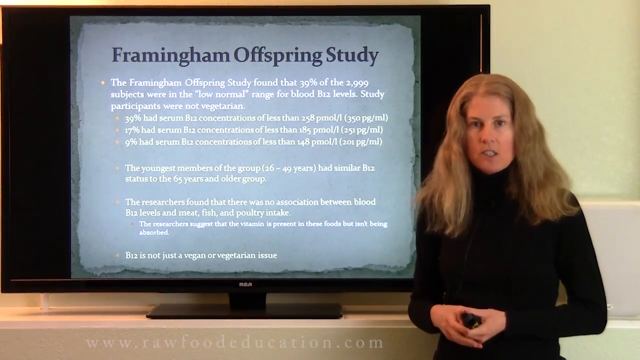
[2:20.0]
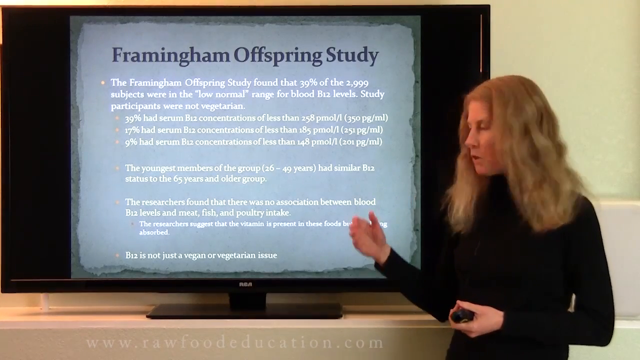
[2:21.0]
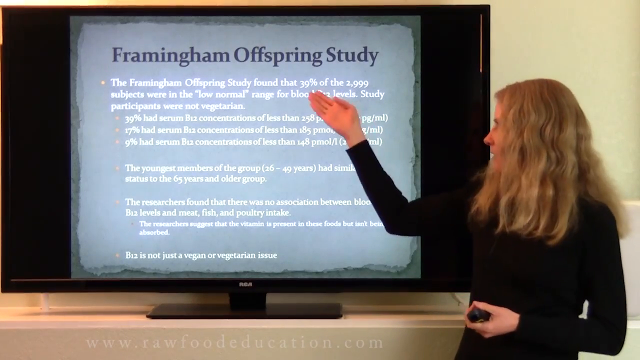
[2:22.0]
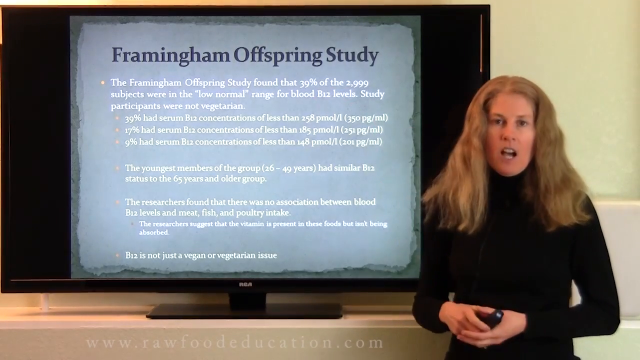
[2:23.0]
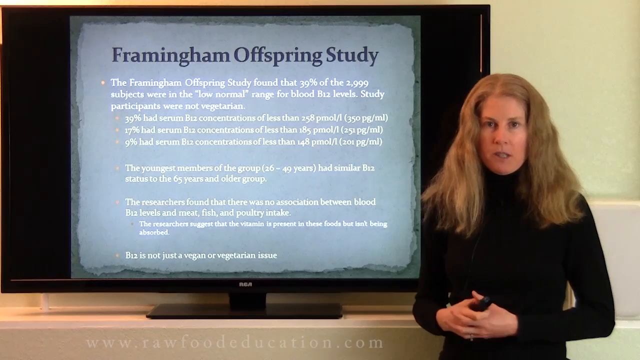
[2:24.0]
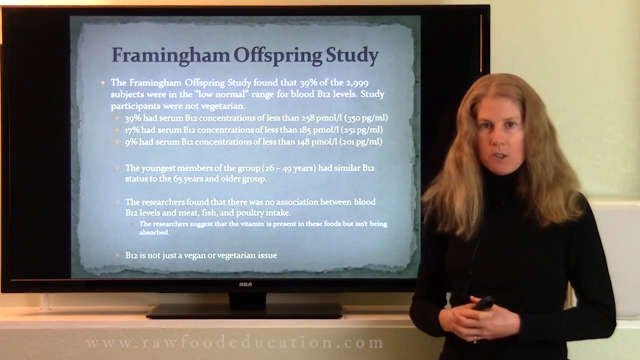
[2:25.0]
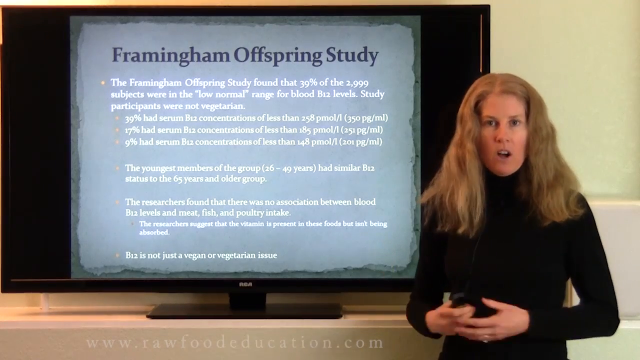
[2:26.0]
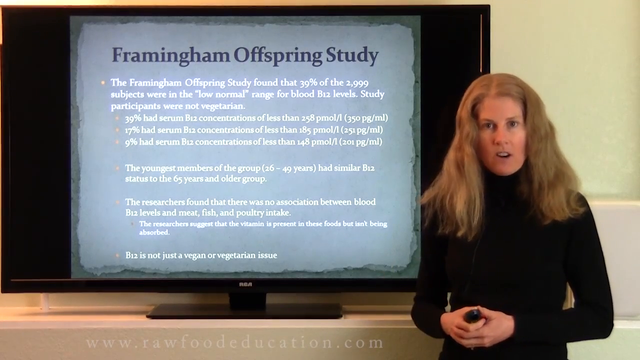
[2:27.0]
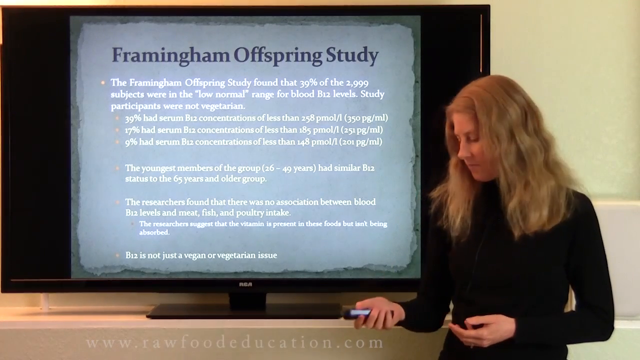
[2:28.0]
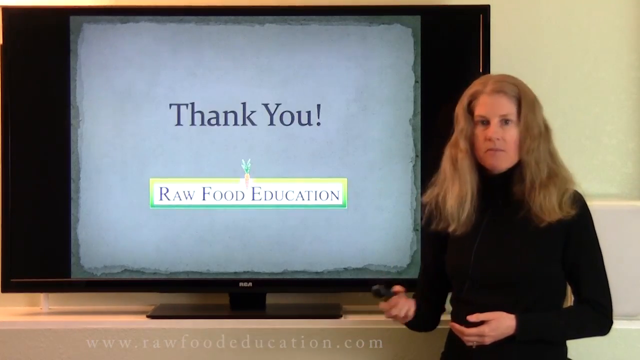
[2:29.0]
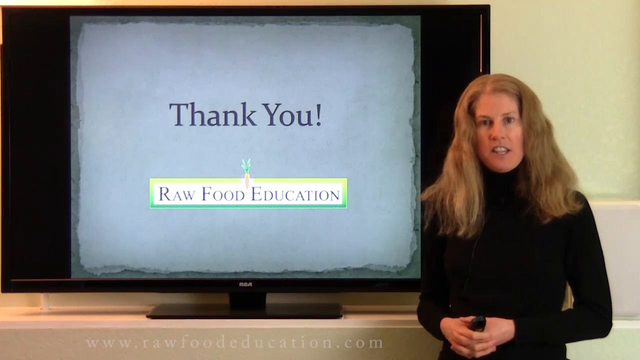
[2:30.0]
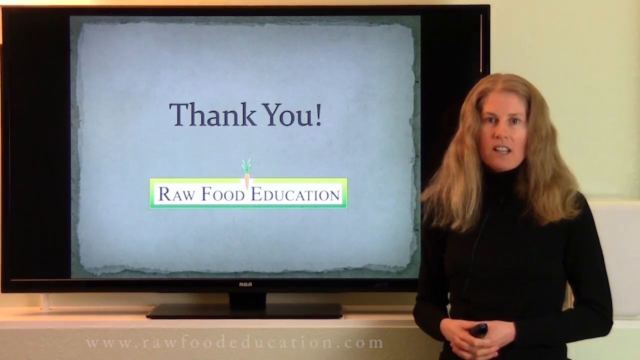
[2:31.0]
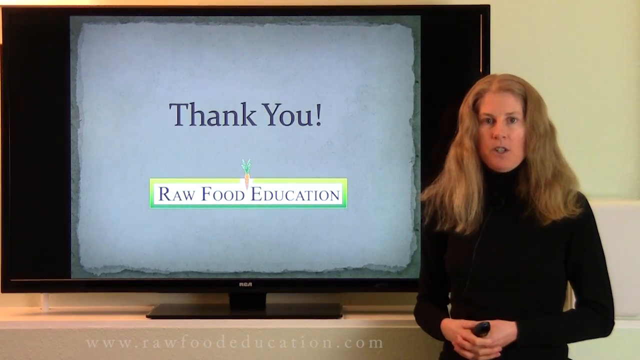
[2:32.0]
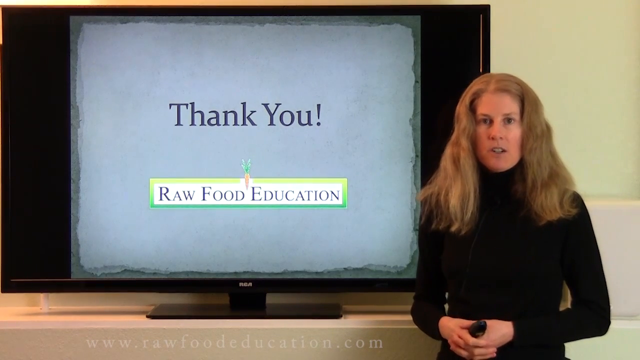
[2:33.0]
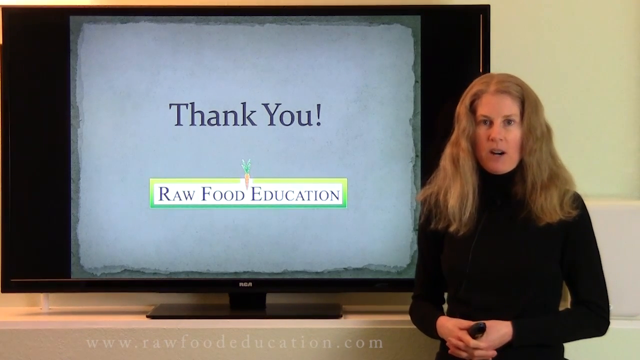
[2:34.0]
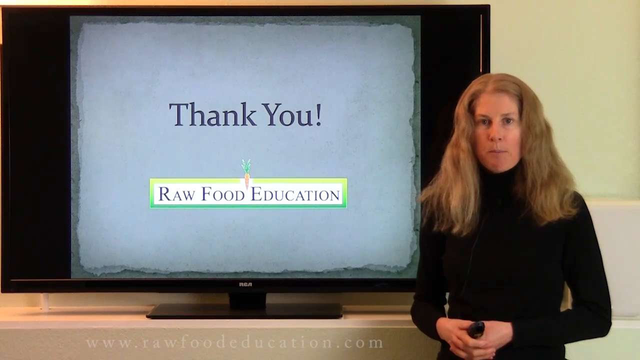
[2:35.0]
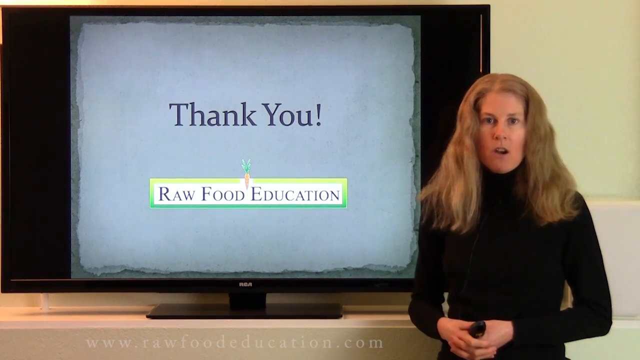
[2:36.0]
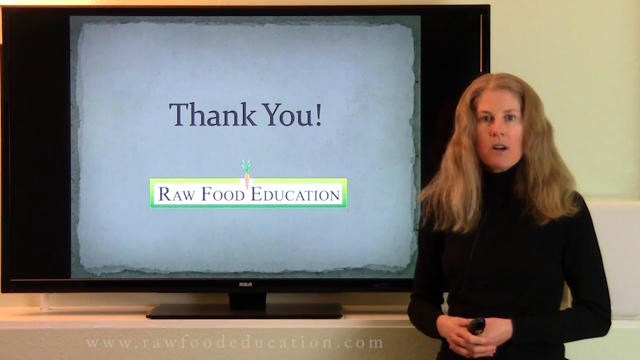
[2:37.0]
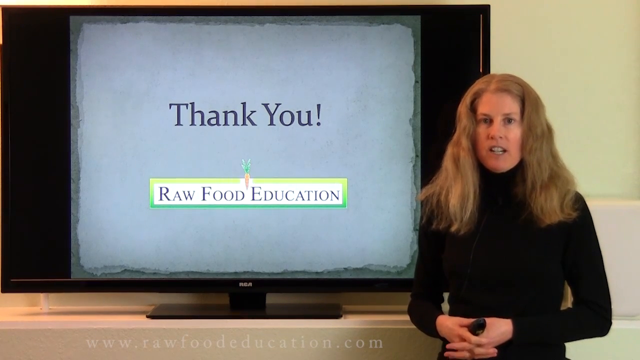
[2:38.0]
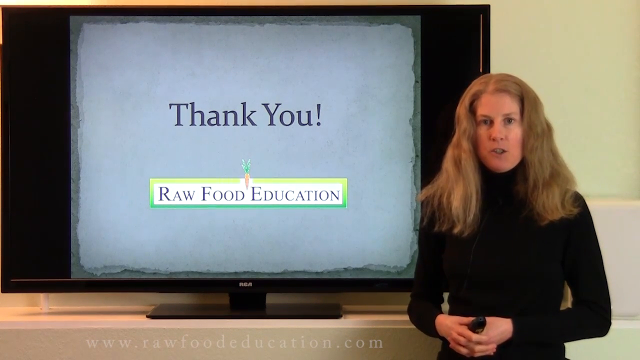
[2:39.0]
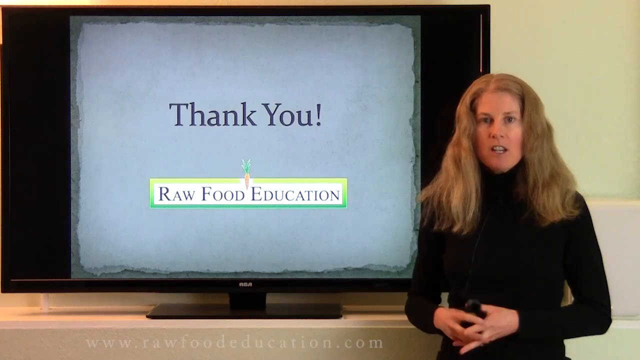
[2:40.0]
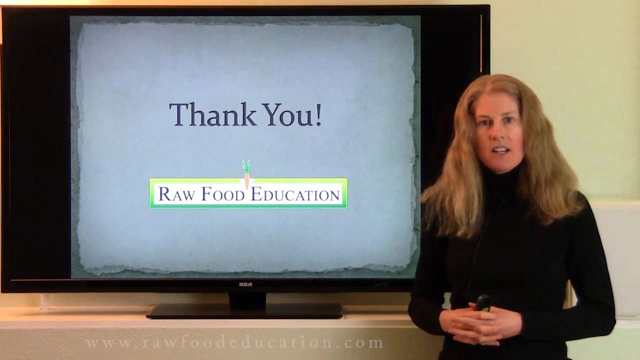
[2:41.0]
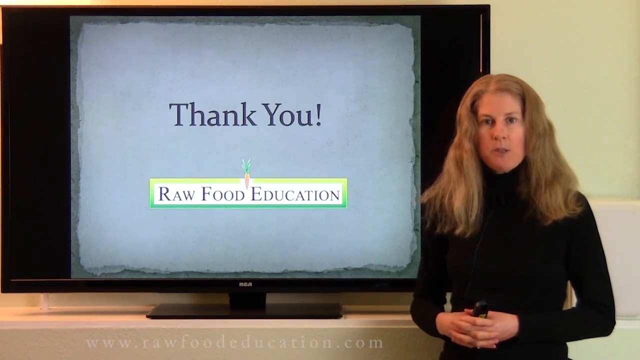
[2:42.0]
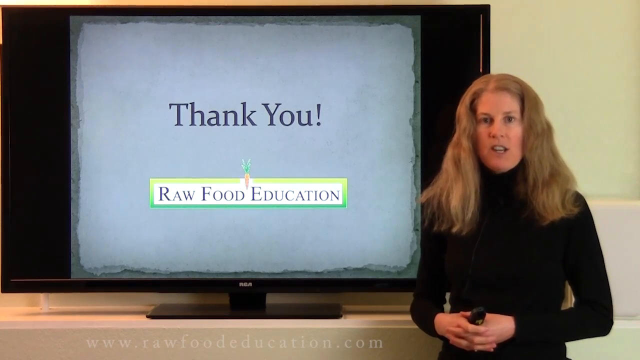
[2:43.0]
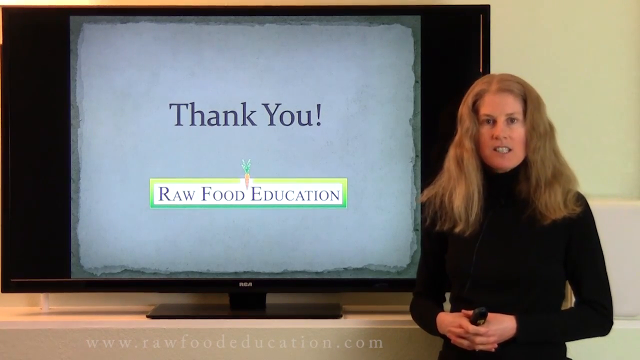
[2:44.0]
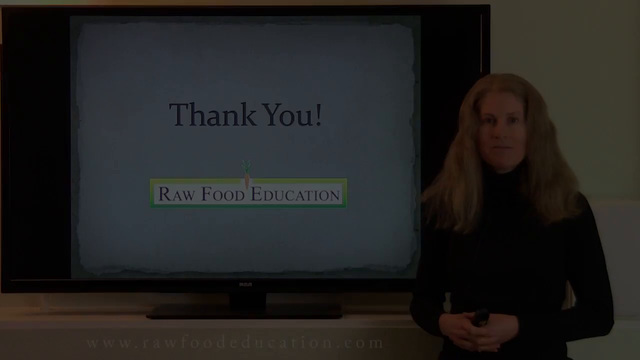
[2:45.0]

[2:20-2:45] The woman in the black sweater, with dirty blonde hair, still has the Framingham Offspring Study on the monitor behind her. She holds a remote control kind of object in her left hand and points up toward the title of the Framingham Offspring Study. She then uses the remote in her right hand to click to the thank-you screen, which shows raw foods education on a blue kind of background, with black sort of sidebars around it. She continues talking on this thank-you page. No other people appear.